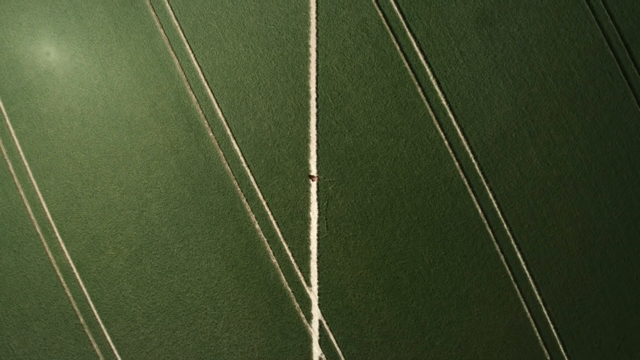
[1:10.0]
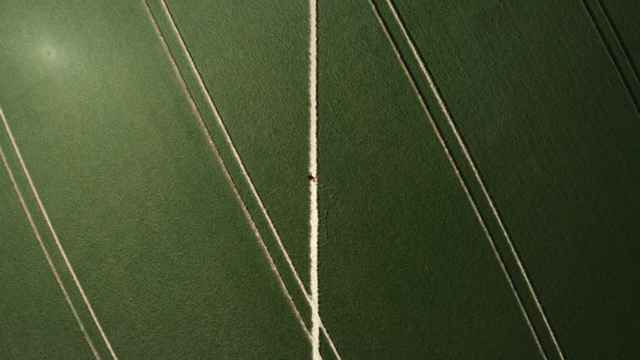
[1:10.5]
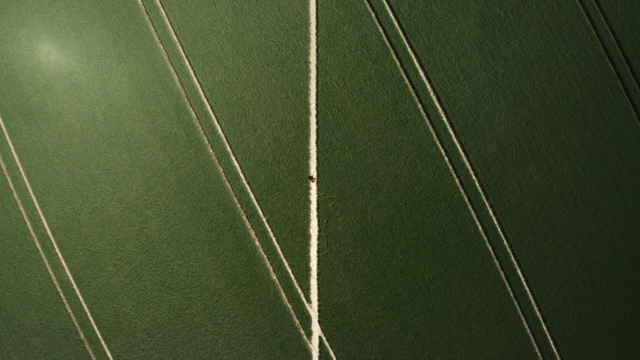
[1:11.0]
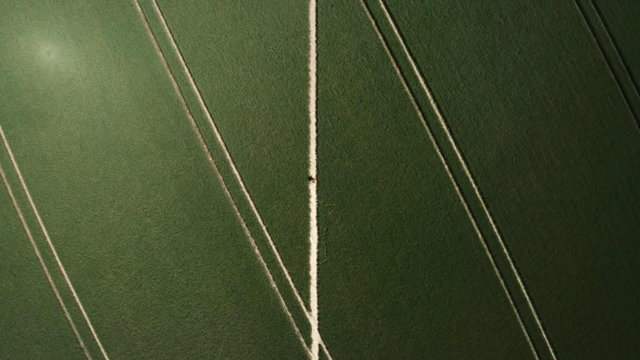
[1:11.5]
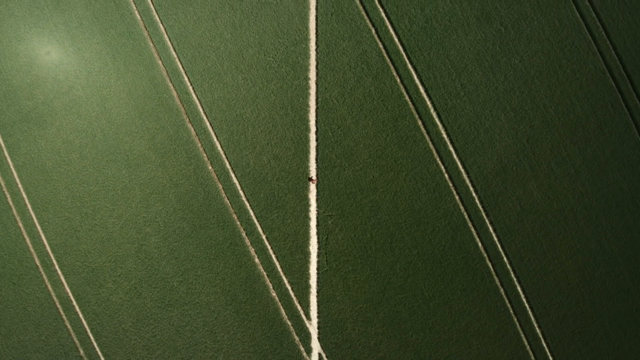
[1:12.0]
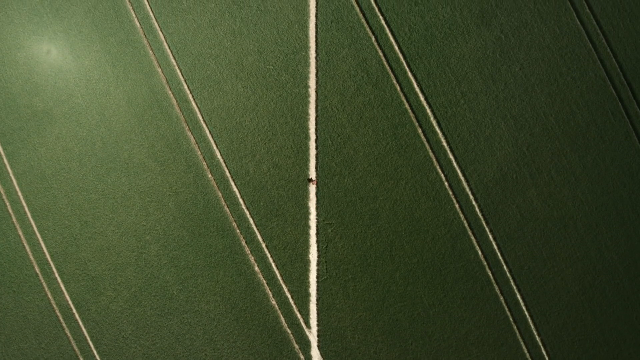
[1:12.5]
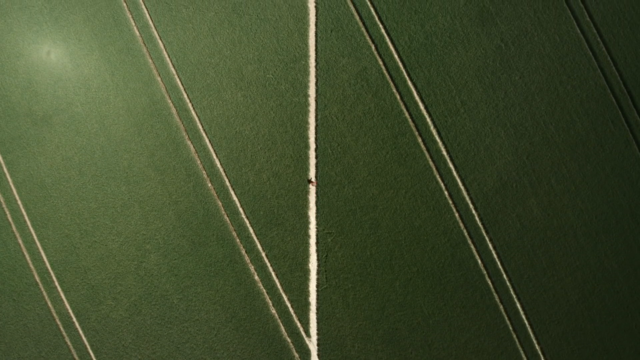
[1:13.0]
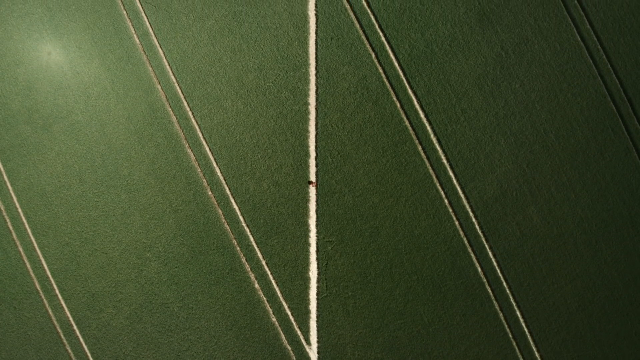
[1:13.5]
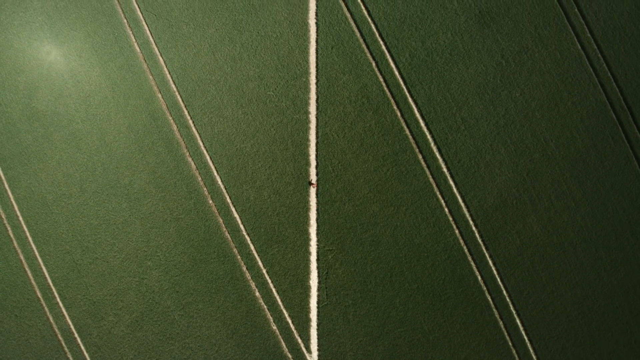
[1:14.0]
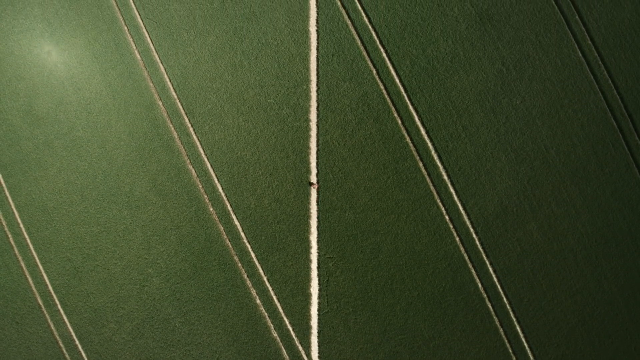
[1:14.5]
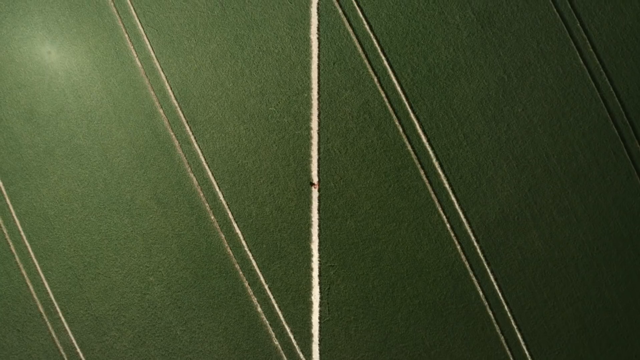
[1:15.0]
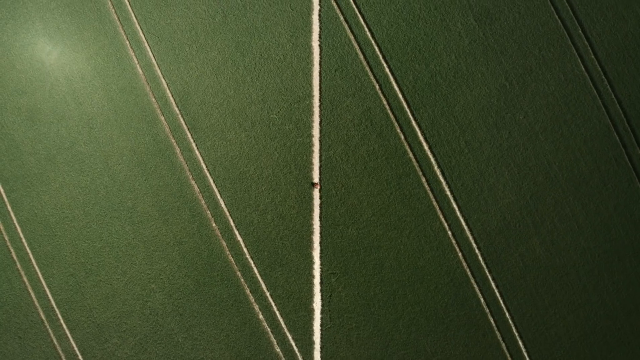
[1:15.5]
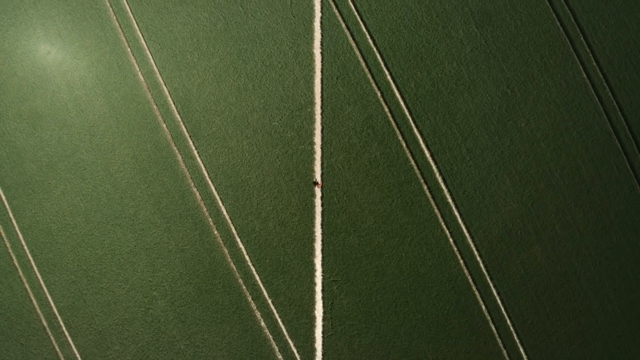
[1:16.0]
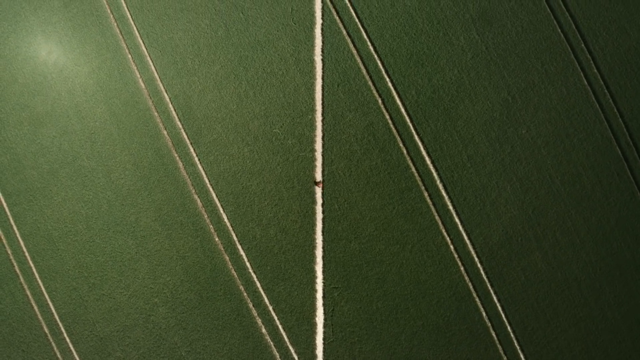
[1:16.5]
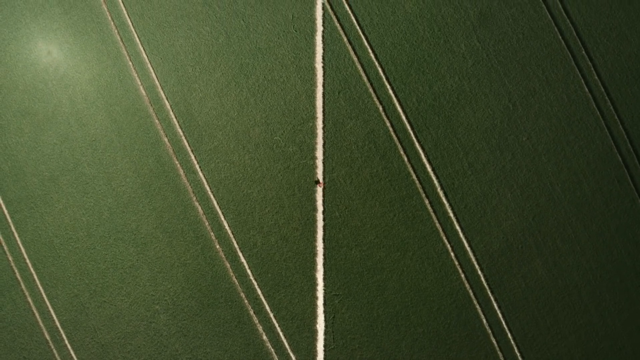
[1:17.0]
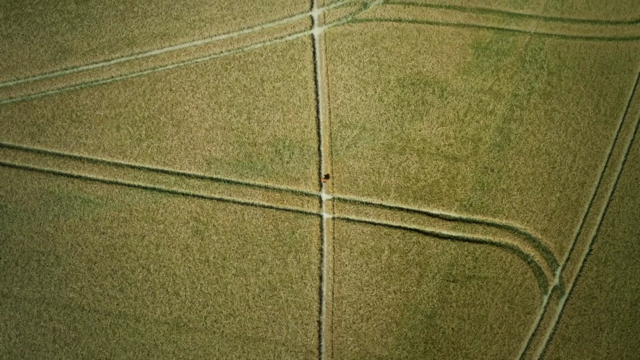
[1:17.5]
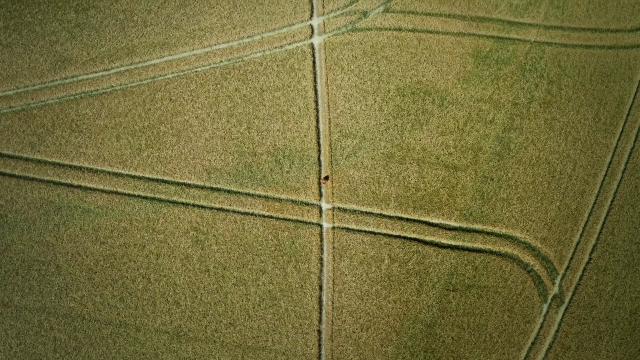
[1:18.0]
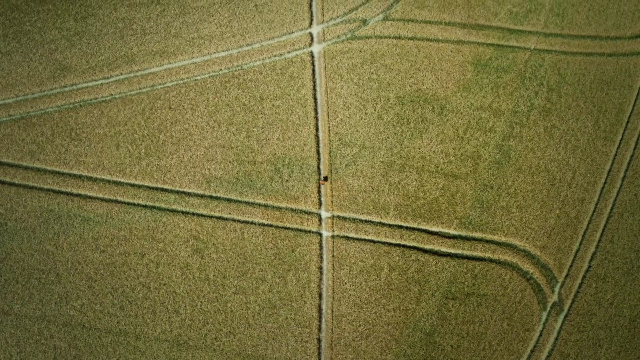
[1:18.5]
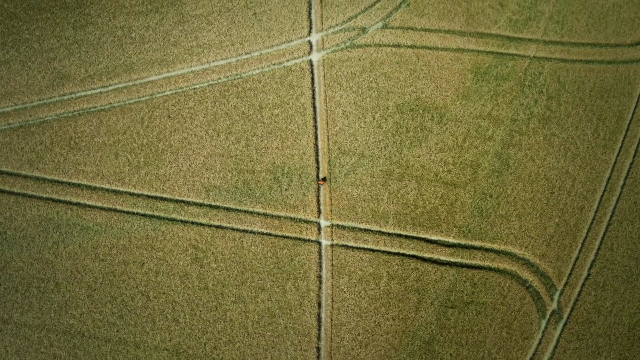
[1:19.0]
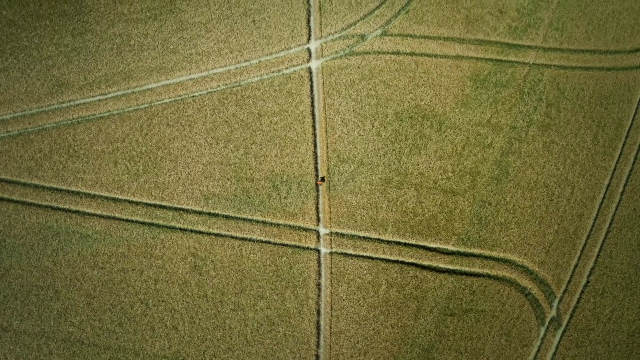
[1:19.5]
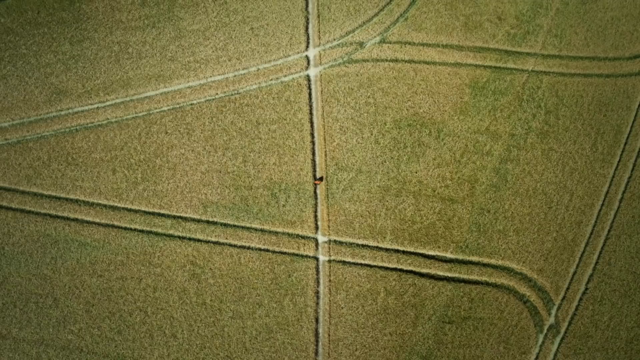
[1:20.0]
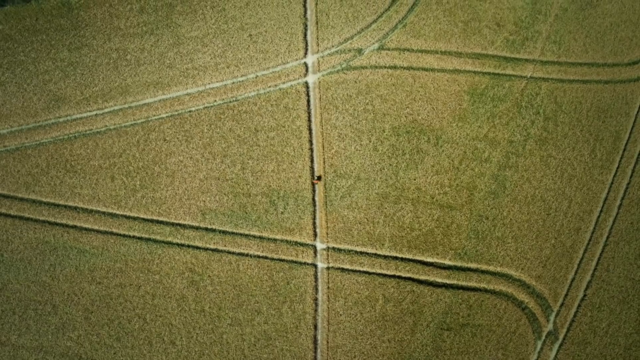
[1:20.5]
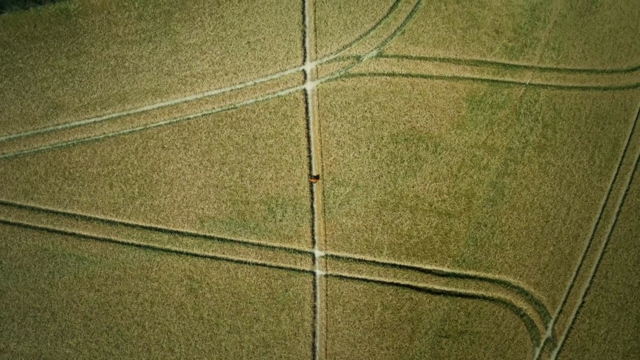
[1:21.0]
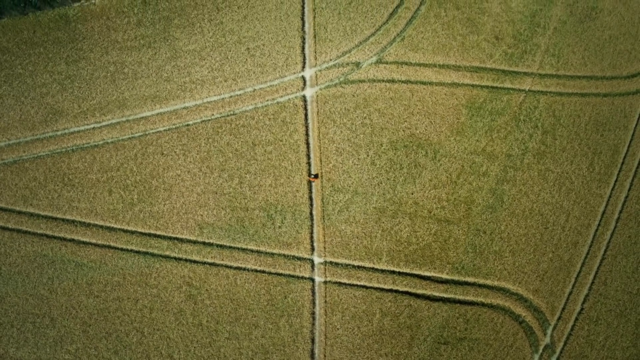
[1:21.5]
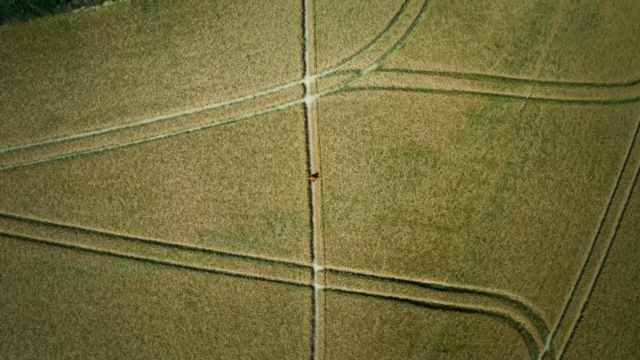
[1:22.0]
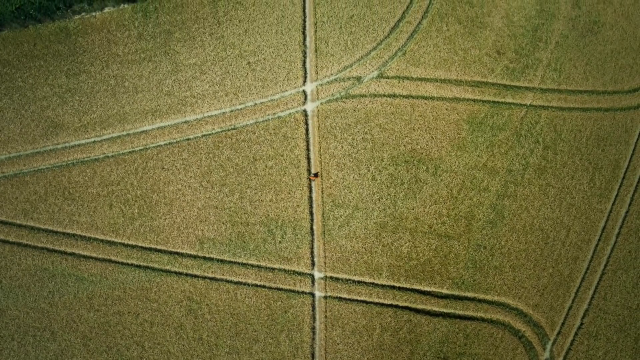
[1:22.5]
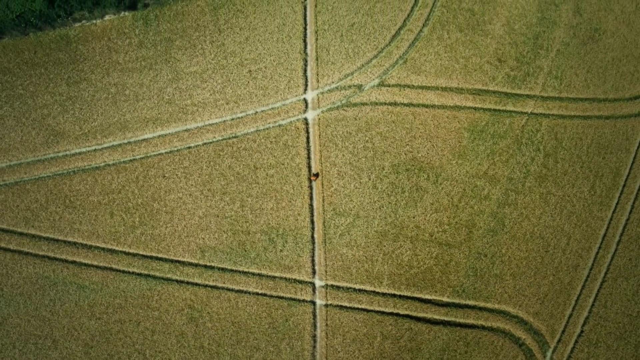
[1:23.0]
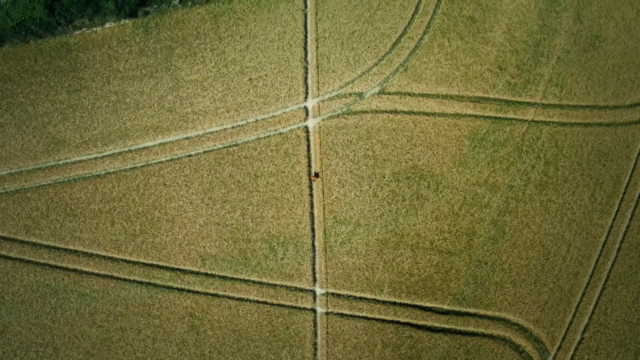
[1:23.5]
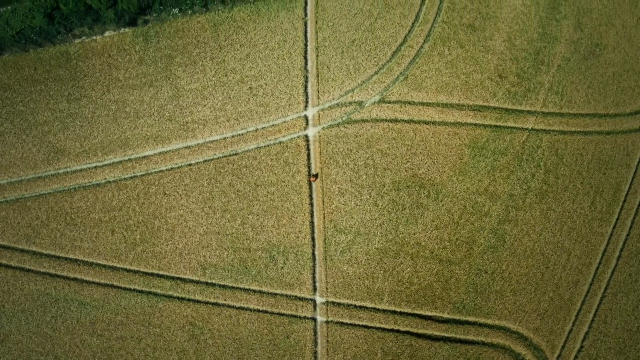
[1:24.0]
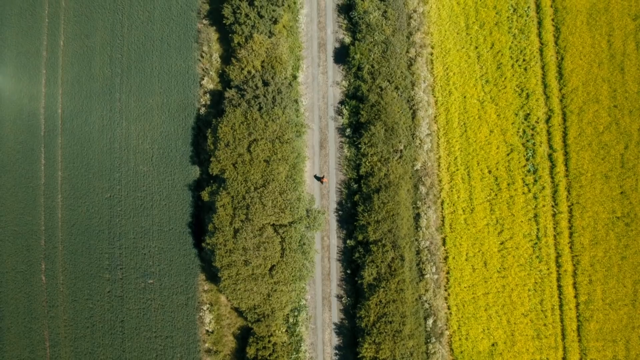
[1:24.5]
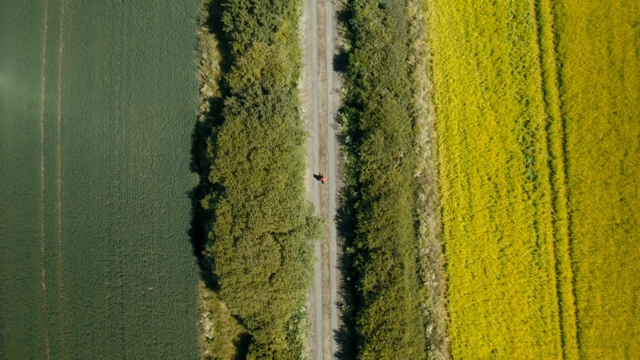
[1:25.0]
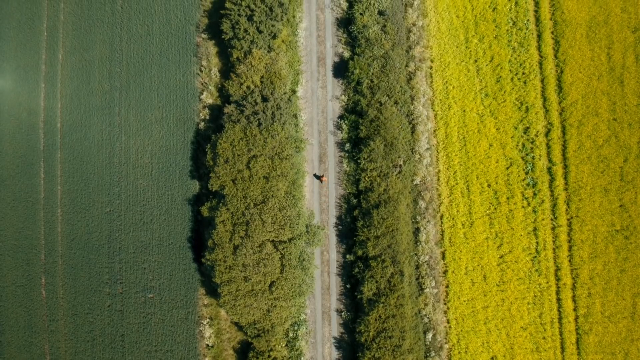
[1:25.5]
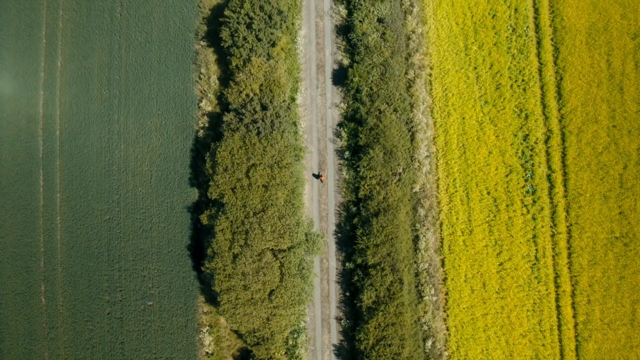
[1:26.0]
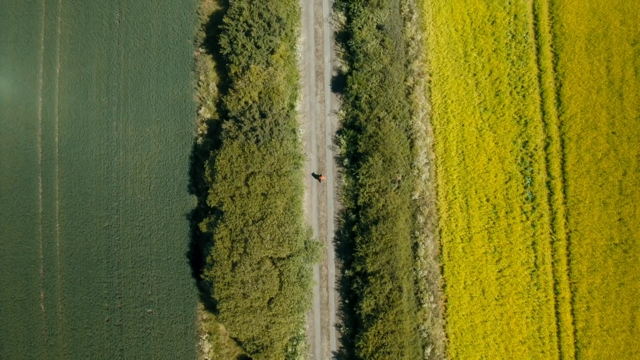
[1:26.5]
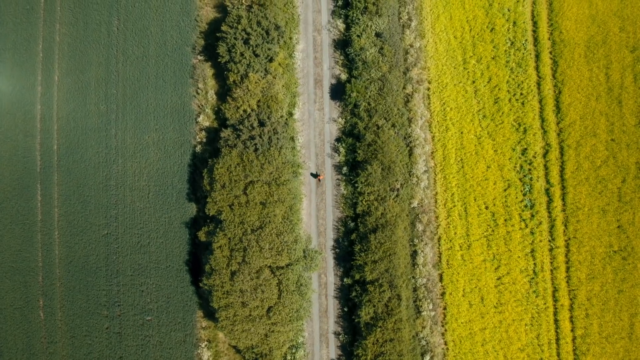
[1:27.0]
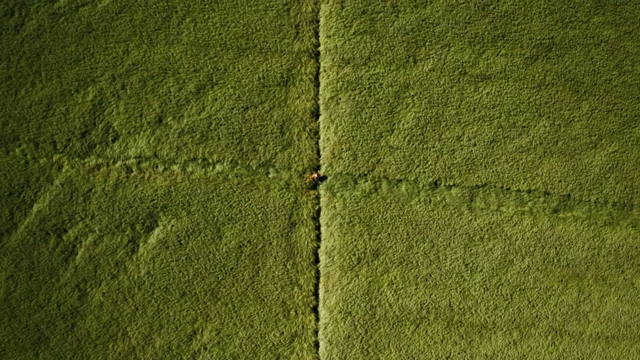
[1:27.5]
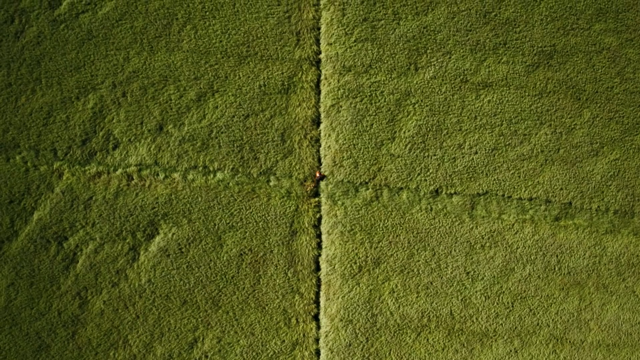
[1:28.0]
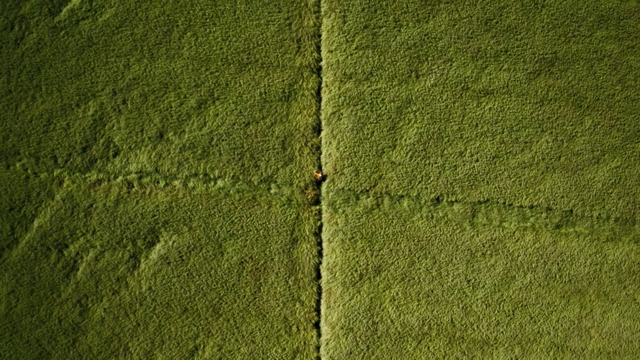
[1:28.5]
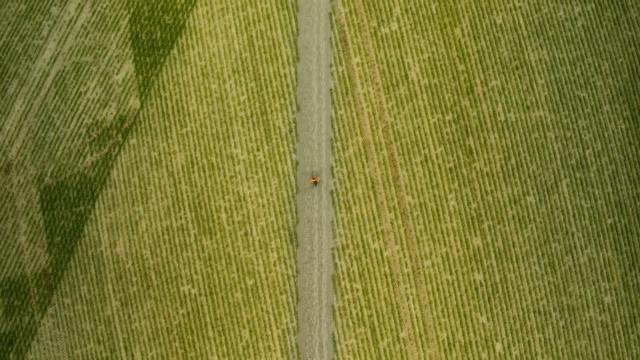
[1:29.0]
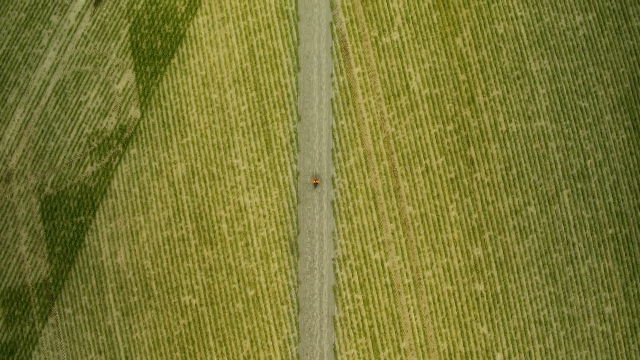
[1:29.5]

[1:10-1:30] Filmed from high up in the sky, with the camera likely mounted on a drone, a balloon or something similar, apparently about 100 feet up, the video looks down on a person moving at a fairly fast clip, seemingly running. In the opening scene a white road runs vertically, and legs can be seen moving very fast, like someone running, surrounded by flat green meadows. It switches to a different landscape where the same figure is running on a vertical road, but the vegetation is more yellowy green. The video switches again to some kind of highway or road, probably meant for cars, surrounded by trees, with the person moving along it. At times they look like they are walking really fast and at times running, but the left, right, left, right movement of the legs is clearly visible.